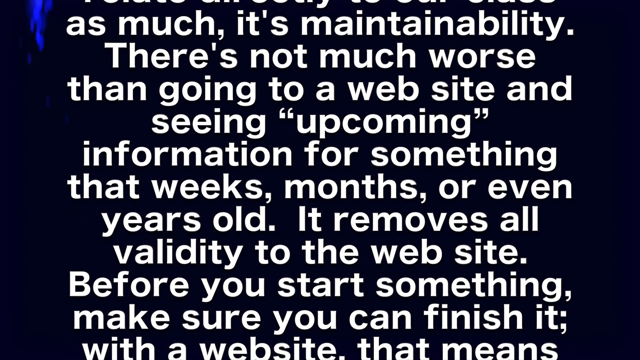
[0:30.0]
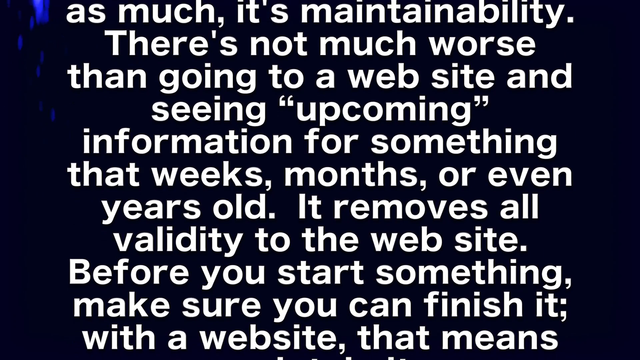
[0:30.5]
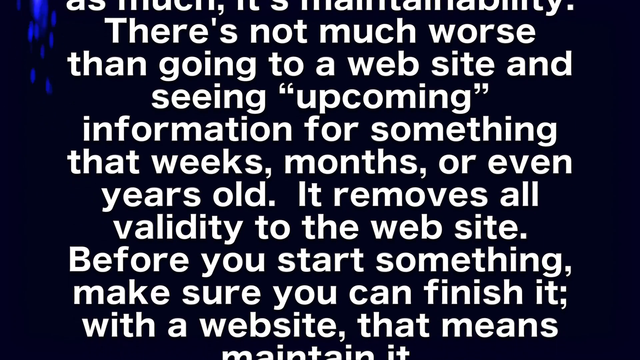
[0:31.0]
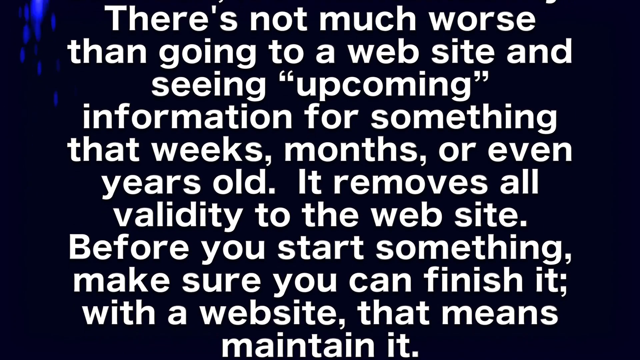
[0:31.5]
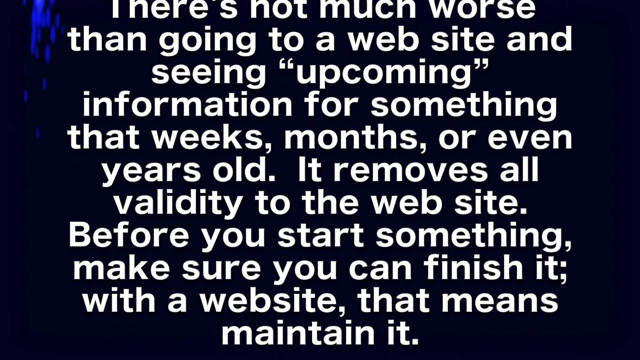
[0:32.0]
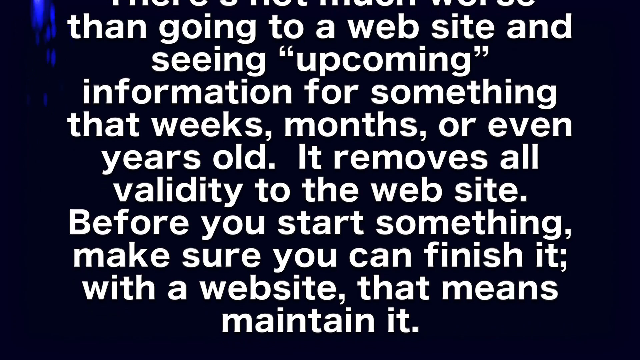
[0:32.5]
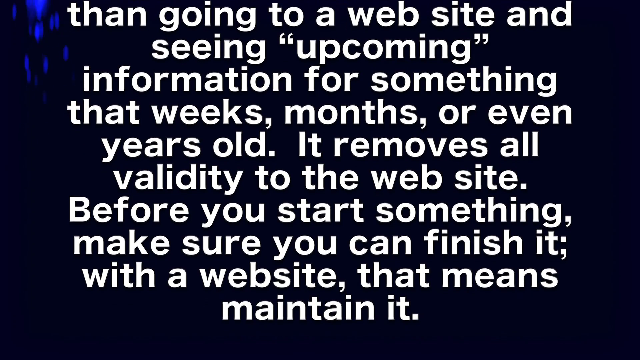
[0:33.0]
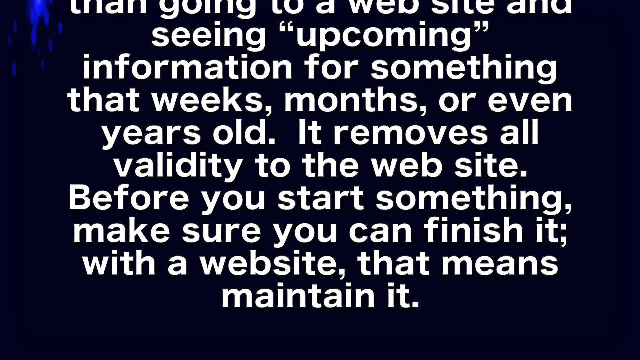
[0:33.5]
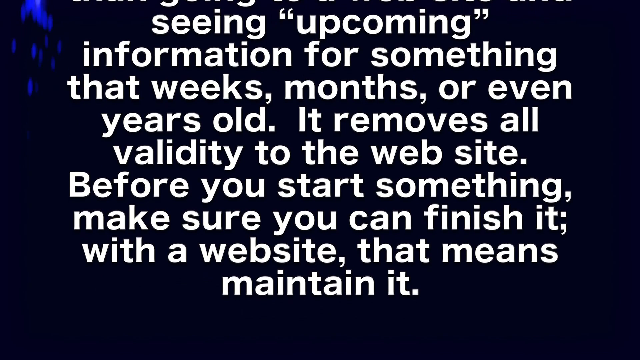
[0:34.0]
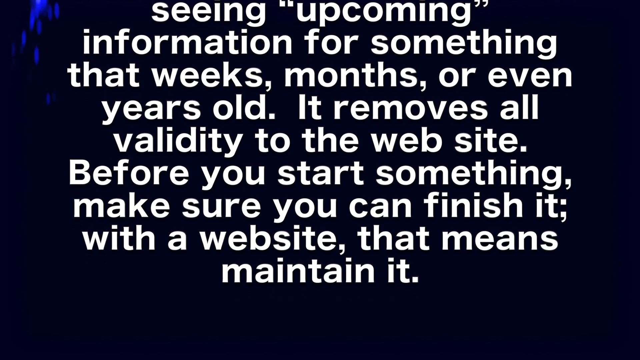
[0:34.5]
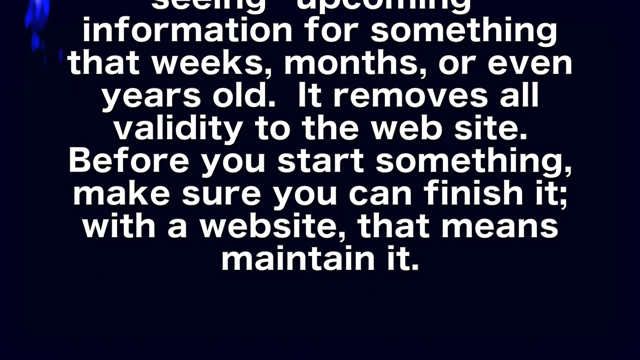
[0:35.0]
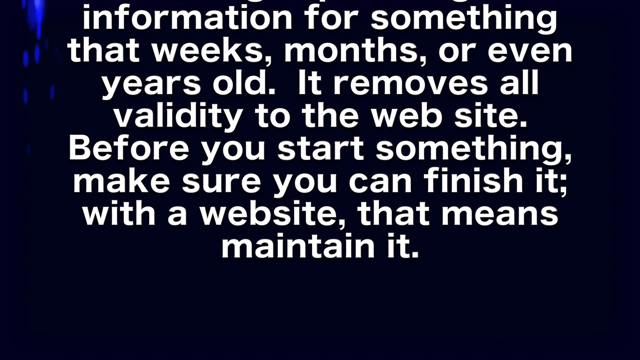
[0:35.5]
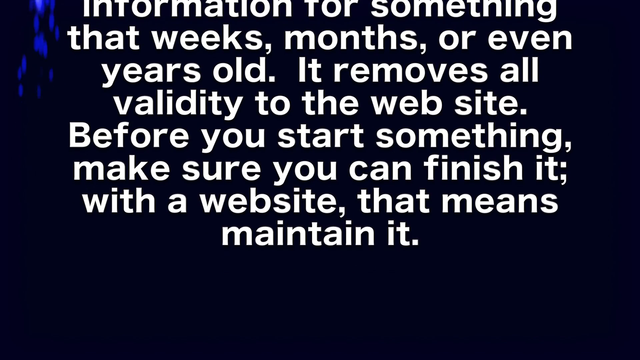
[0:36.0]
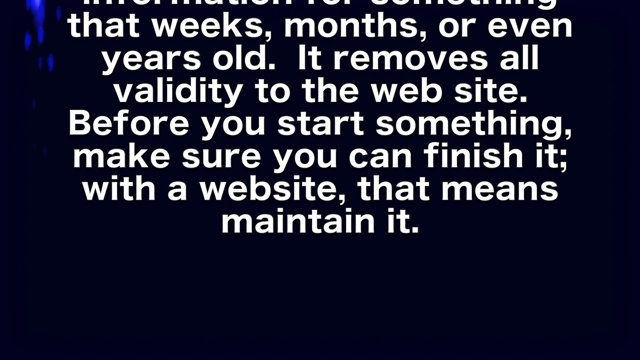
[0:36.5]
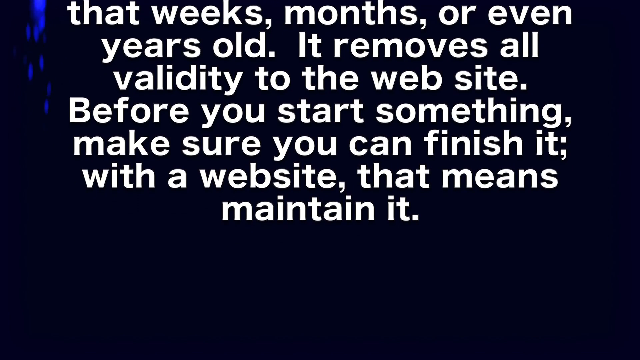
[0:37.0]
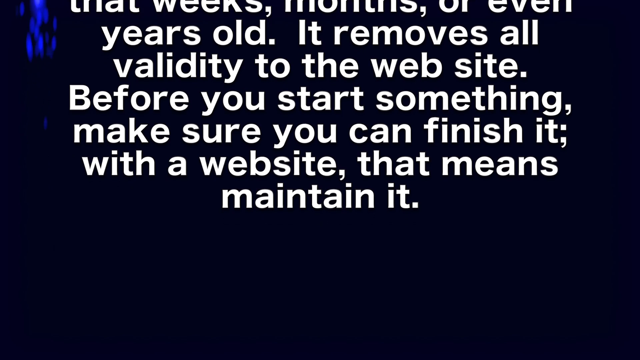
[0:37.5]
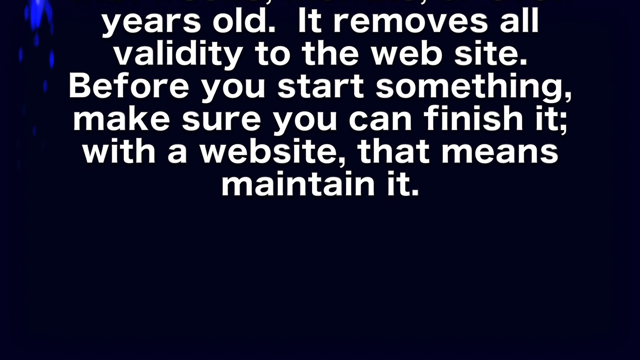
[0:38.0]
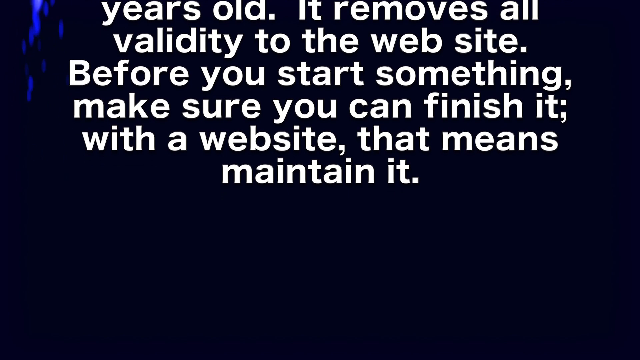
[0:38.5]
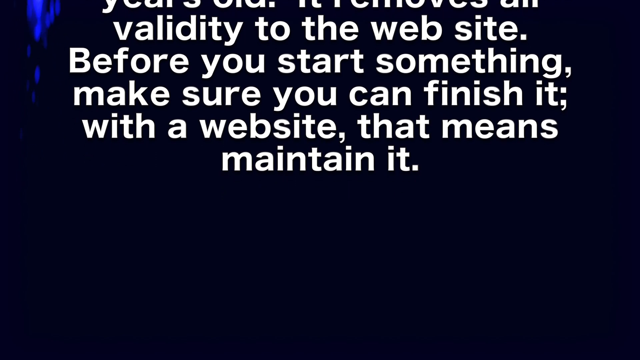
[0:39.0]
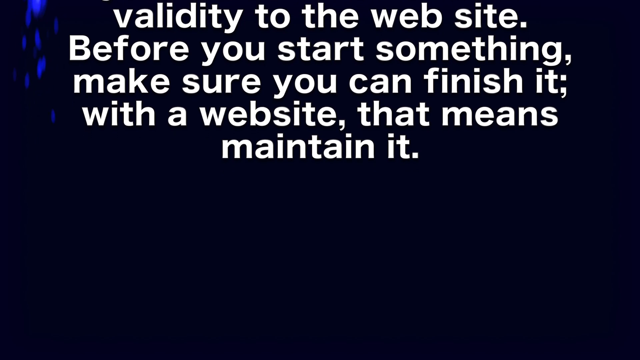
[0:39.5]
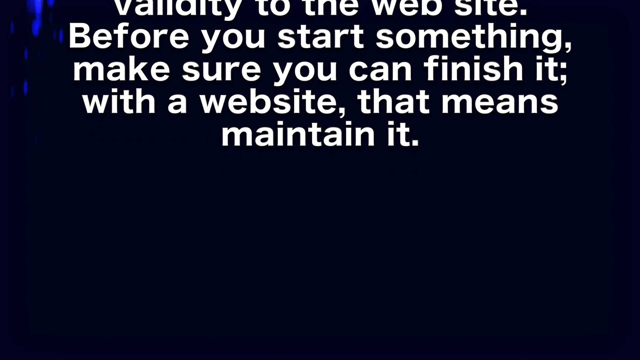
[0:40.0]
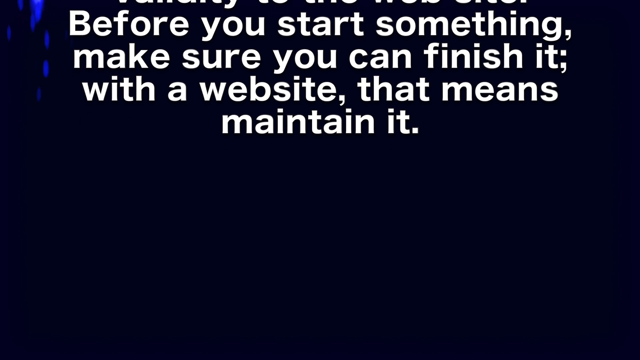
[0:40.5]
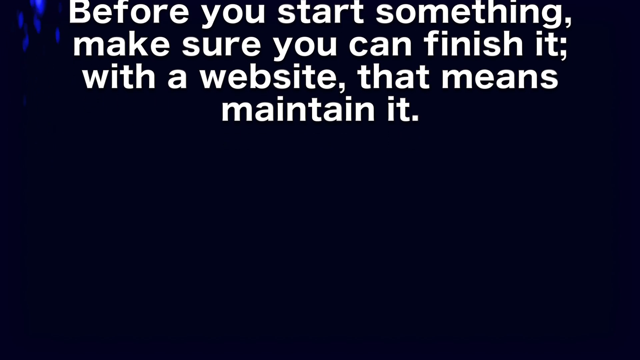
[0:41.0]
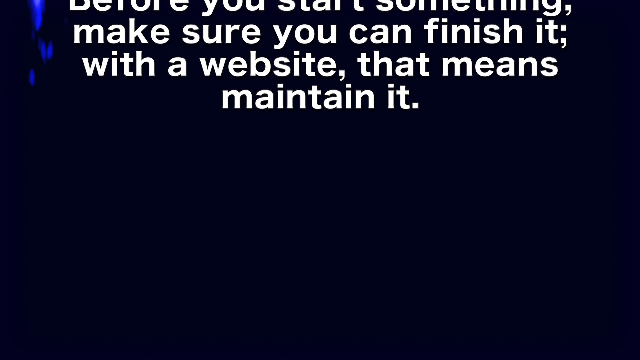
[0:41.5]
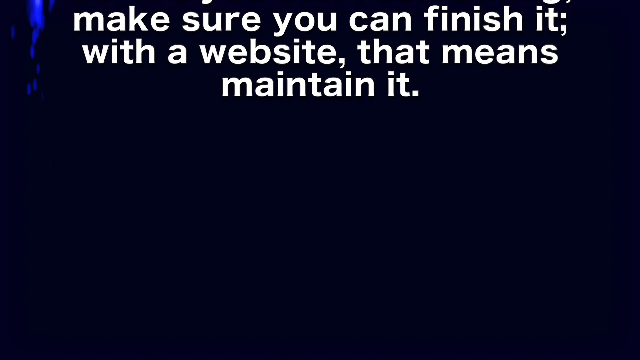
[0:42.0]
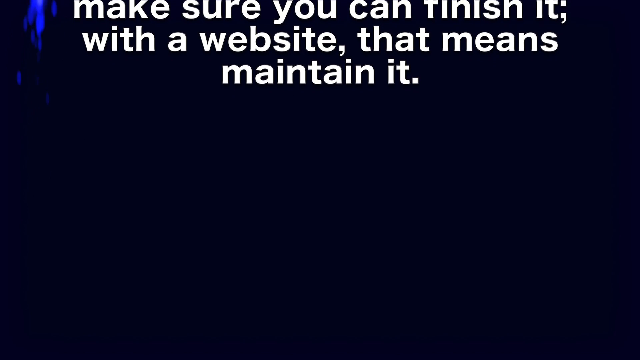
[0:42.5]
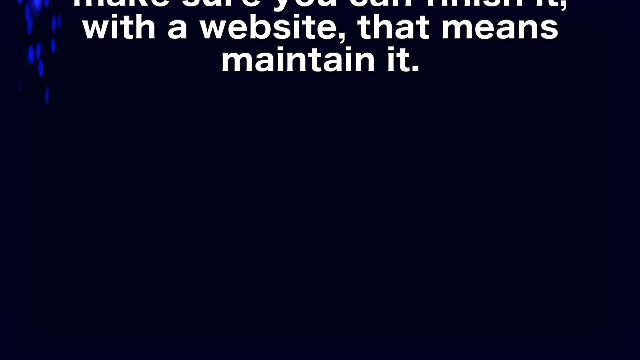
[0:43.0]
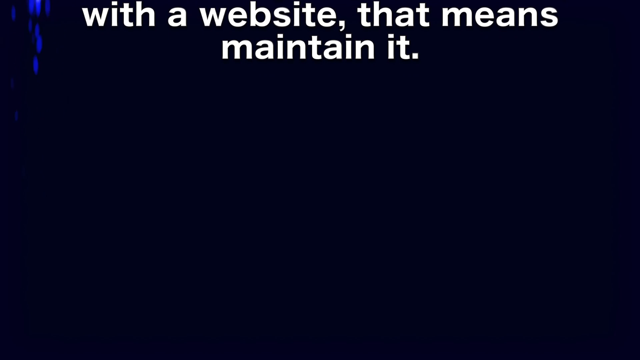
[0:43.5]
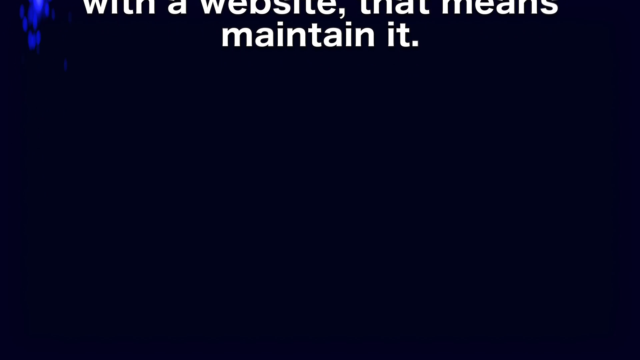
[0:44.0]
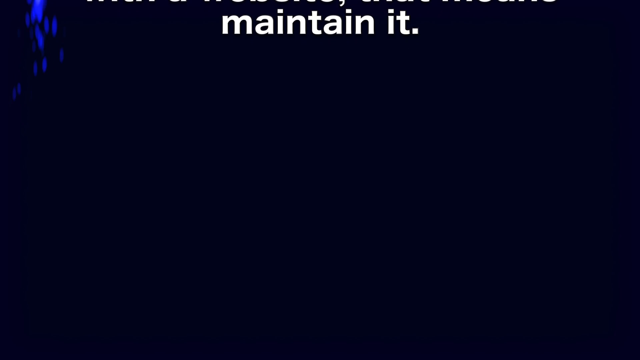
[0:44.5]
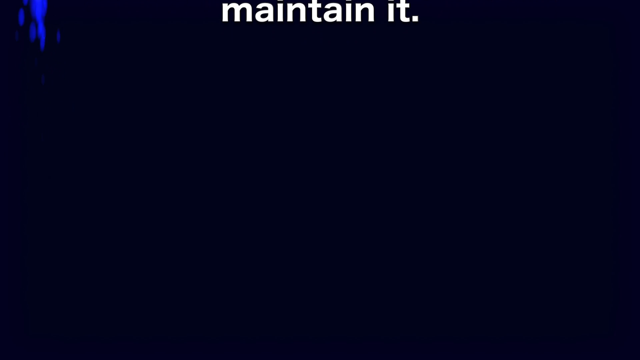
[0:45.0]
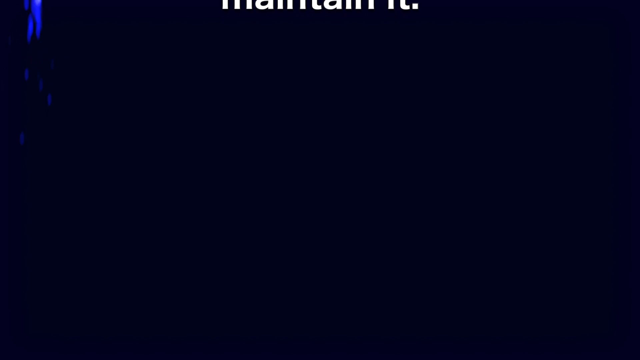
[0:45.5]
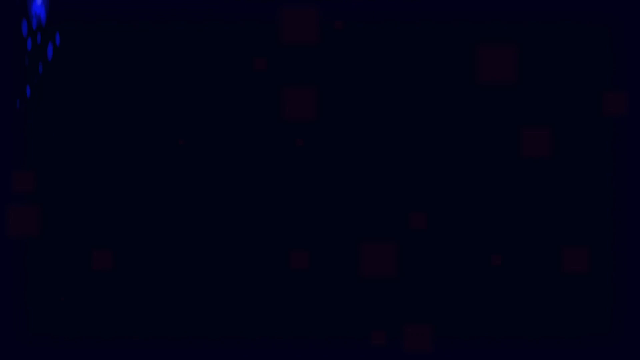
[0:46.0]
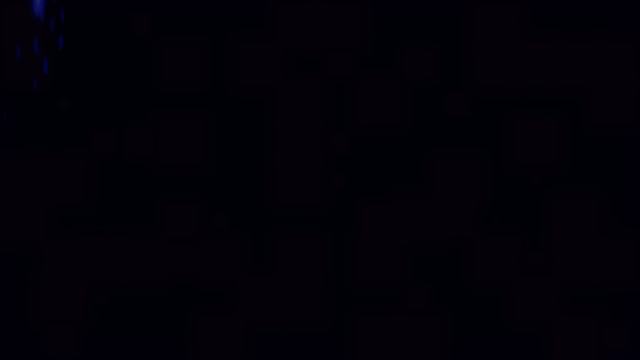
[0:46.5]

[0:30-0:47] White text scrolls on the screen from the bottom to the top, placed on top of a dark blueish and blackish background. The scrolling text reads, "as much it's maintainability, there's not much worse than going to a website and seeing upcoming information for something that weeks, months, or even years old. It removes all the validity to the website. Before you start something, make sure you can finish it. With a website, that means maintain it." The background remains dark blueish and blackish, and there is a blue animation in the upper left-hand corner that appears to be blue droplets falling into the dark background. The text continues to scroll off screen.